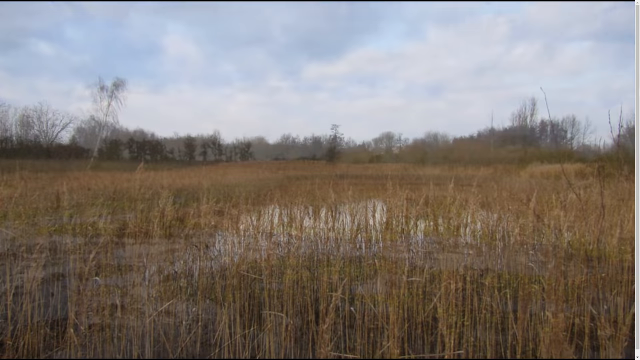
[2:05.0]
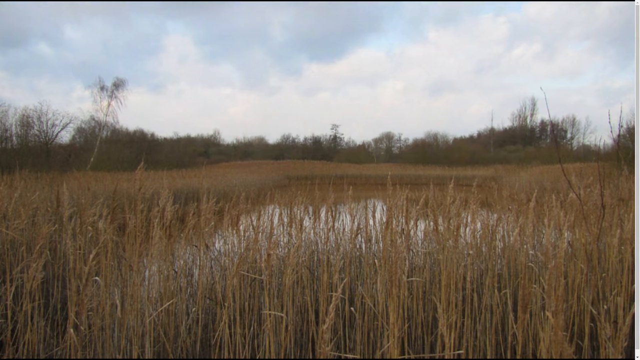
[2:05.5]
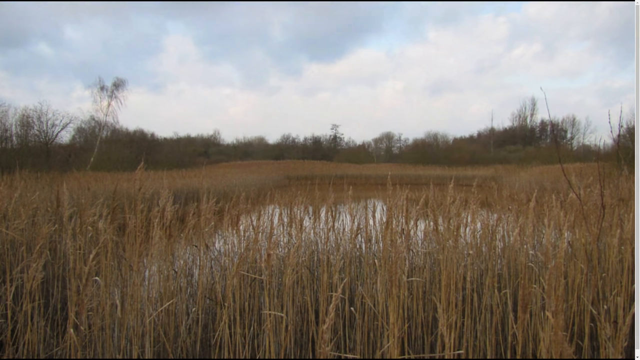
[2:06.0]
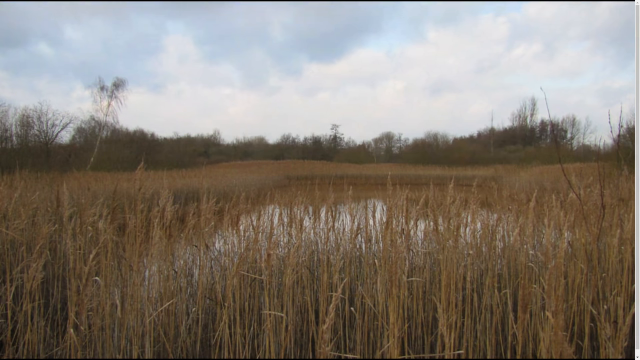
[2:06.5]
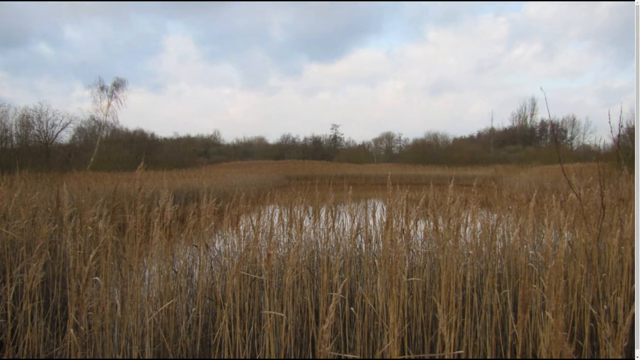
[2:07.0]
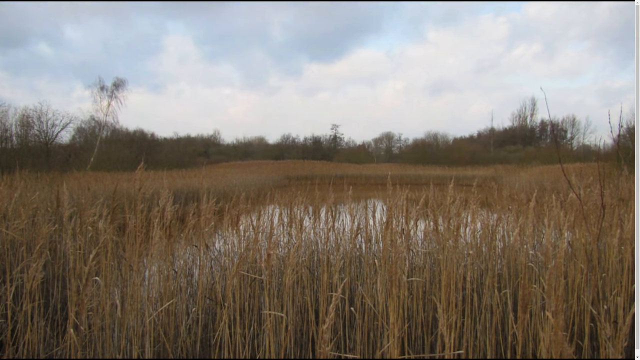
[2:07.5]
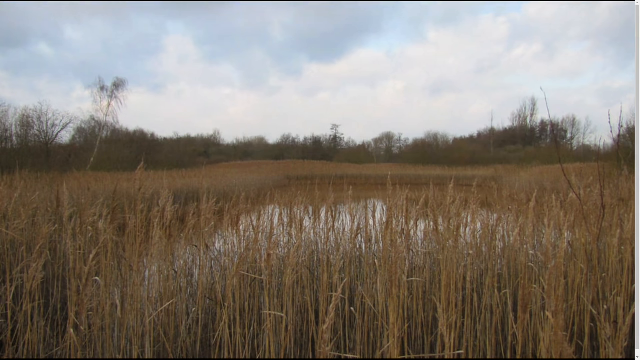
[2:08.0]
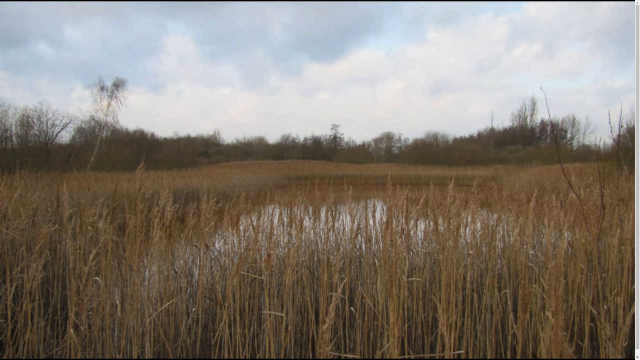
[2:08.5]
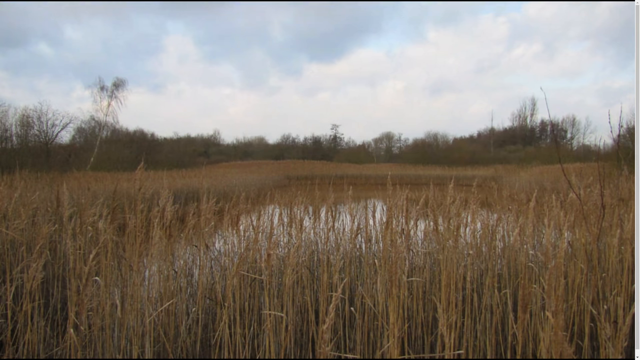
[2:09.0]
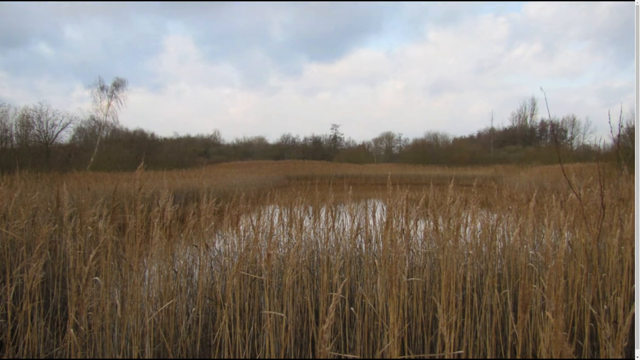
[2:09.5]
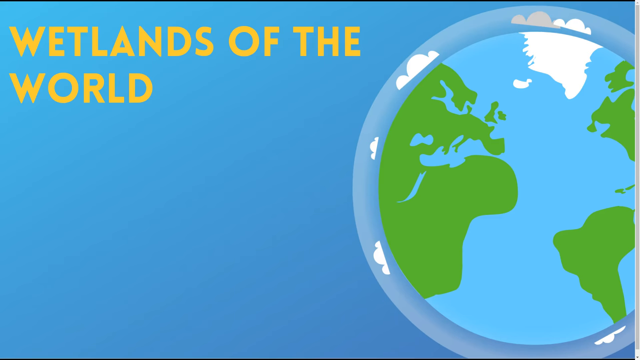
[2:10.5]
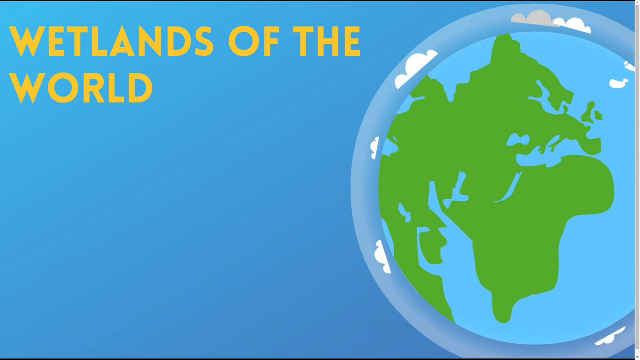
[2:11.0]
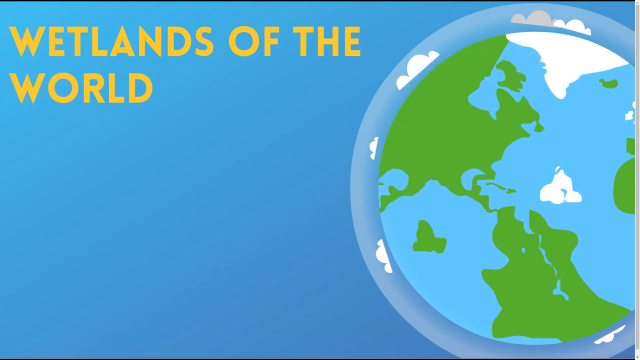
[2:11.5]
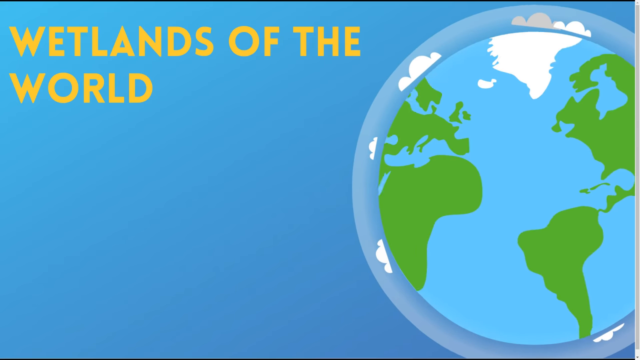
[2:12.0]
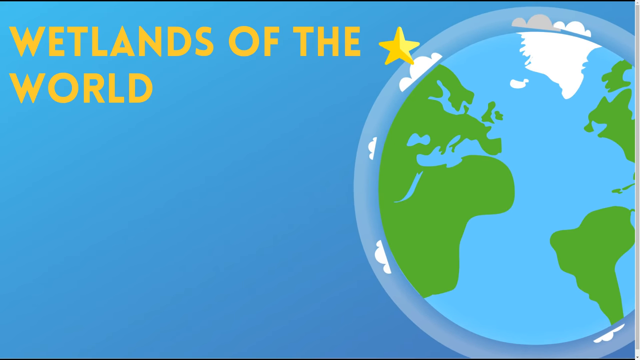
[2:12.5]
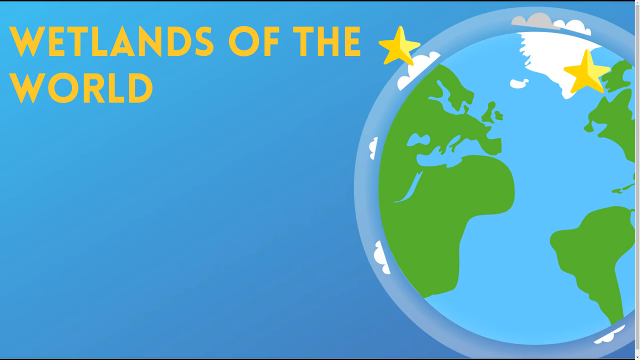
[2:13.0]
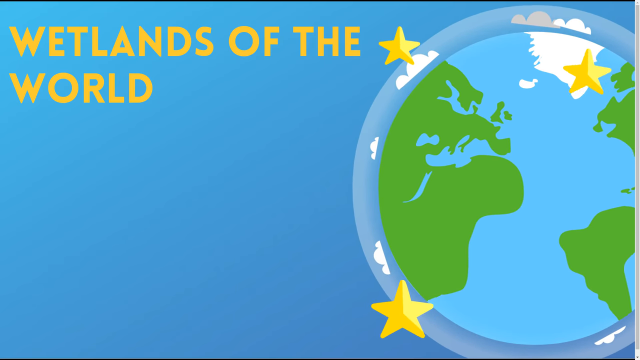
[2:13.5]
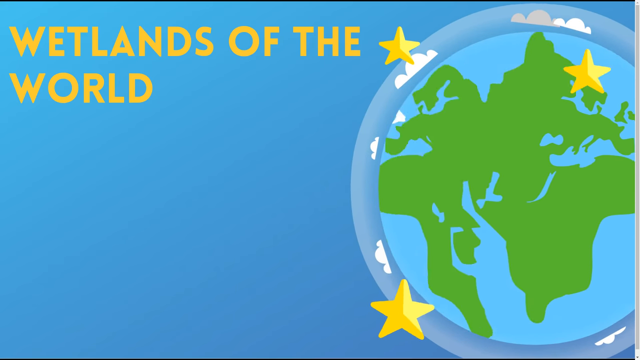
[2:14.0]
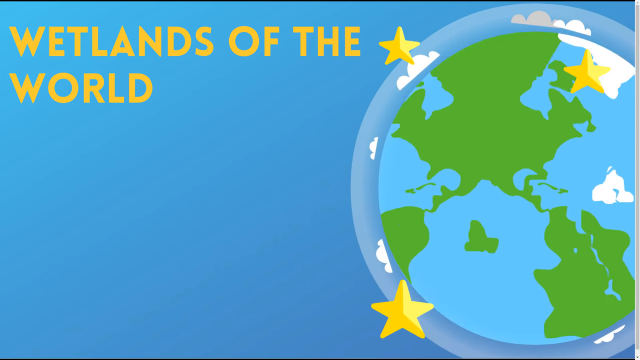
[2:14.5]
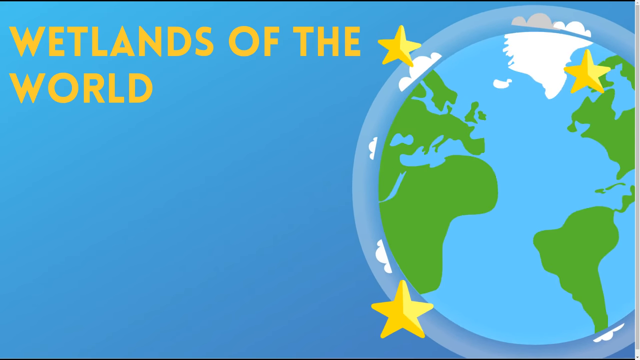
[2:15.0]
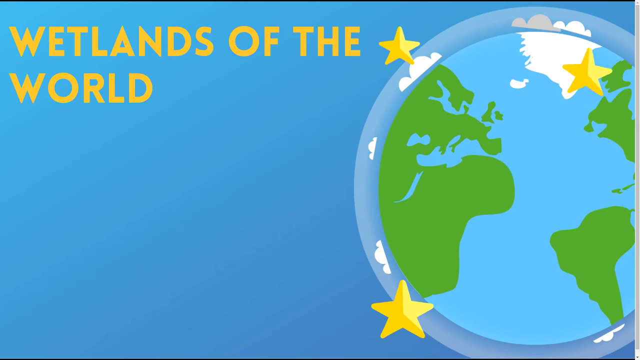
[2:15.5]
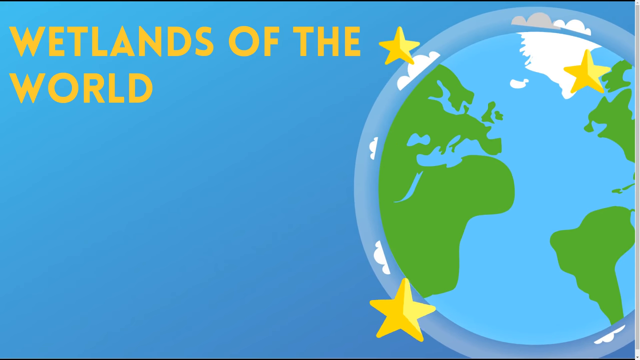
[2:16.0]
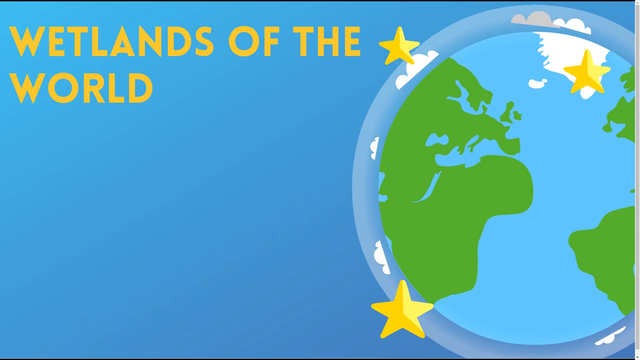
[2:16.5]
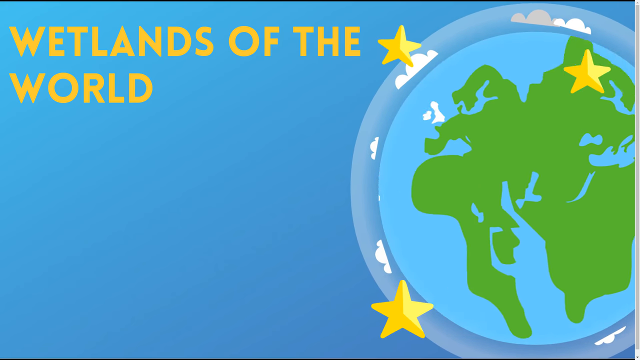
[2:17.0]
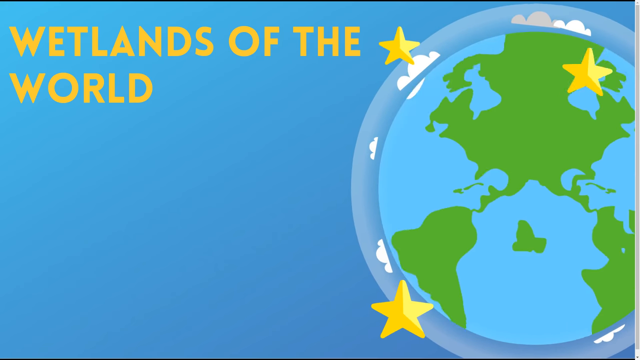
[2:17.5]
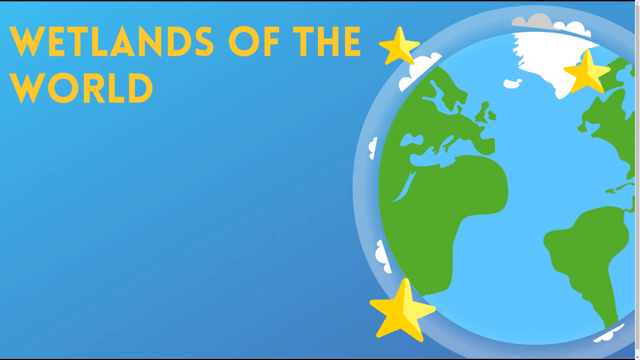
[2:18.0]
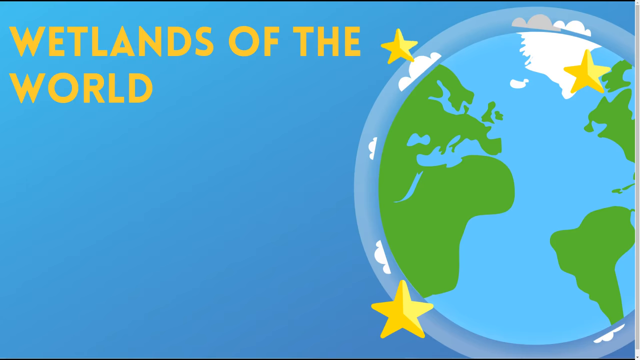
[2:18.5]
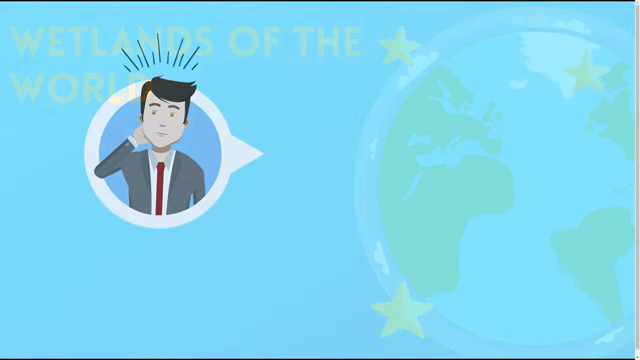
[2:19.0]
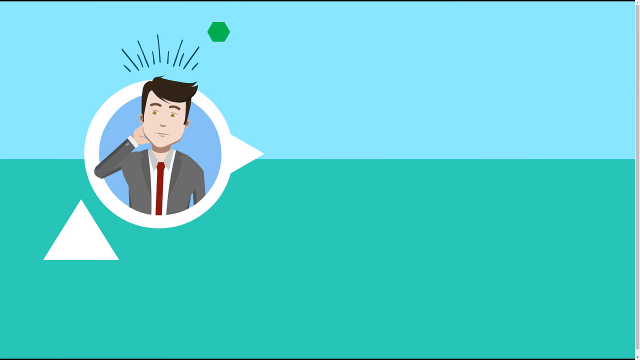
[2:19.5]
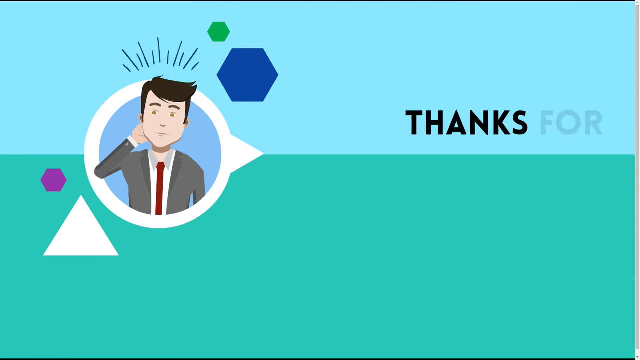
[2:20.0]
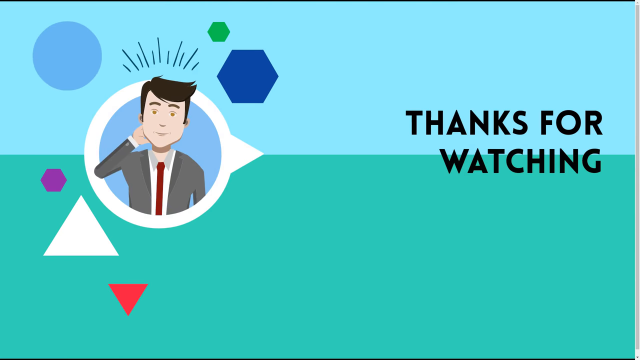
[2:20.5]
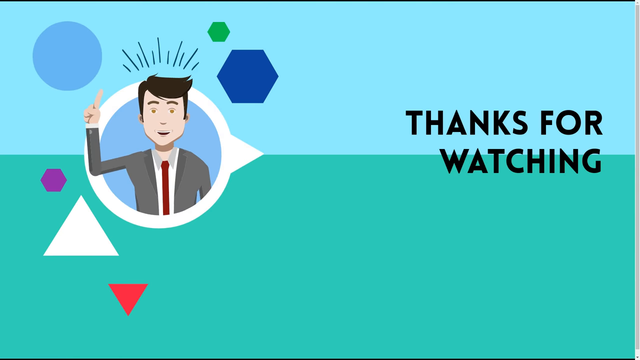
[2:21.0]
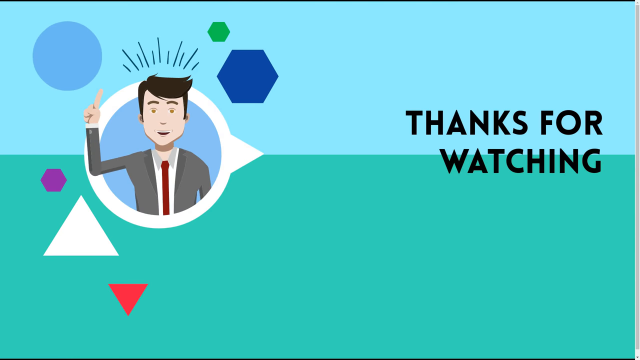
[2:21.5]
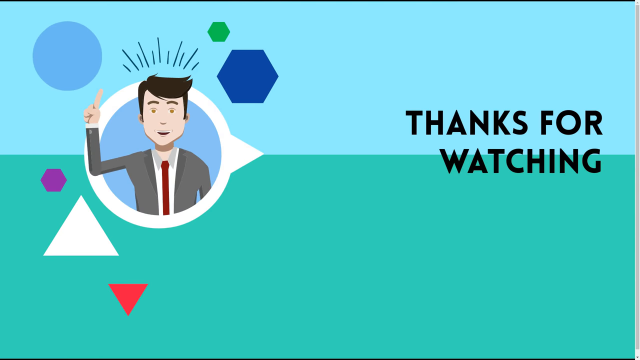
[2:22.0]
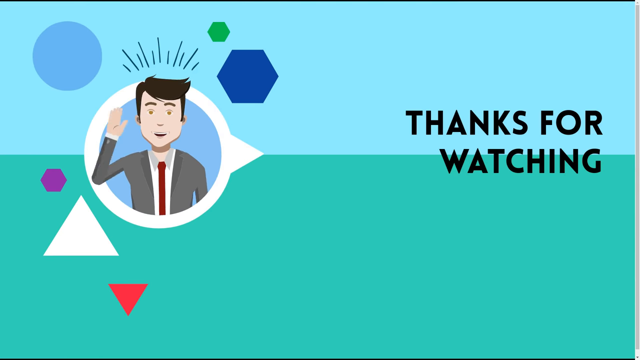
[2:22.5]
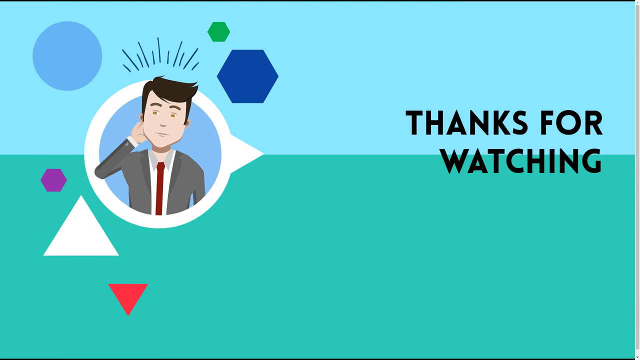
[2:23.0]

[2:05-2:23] More close-ups show the hay-looking grass, which is very dark or almost dead-looking. The video then transitions from pictures of nature into animation: a spinning globe with white clouds around it and gold or yellowish-gold five-pointed stars. Yellow letters read "wetlands of the world". After the globe spins about three times to the right, the animation transitions to the words "thanks for watching" in black. An animated man in a suit on the left is waving, seemingly waving goodbye.